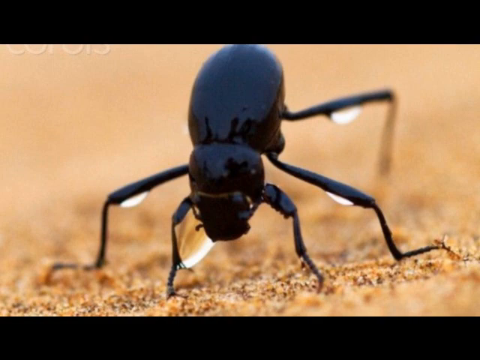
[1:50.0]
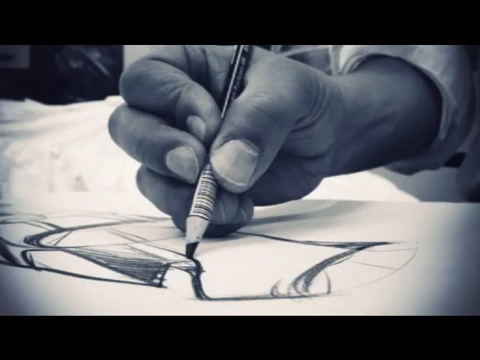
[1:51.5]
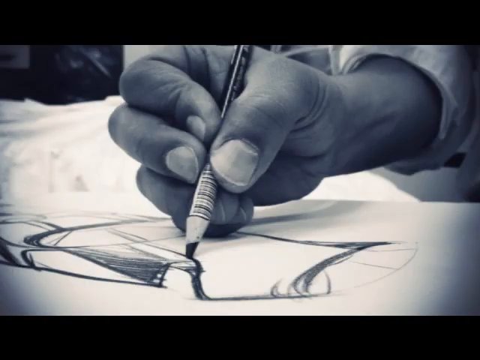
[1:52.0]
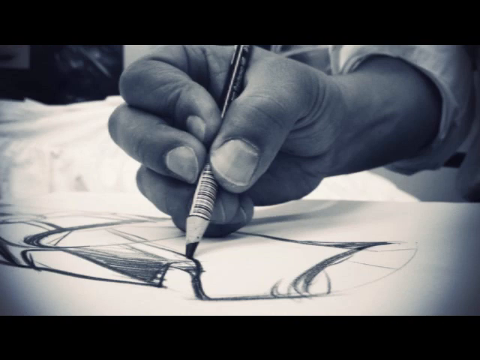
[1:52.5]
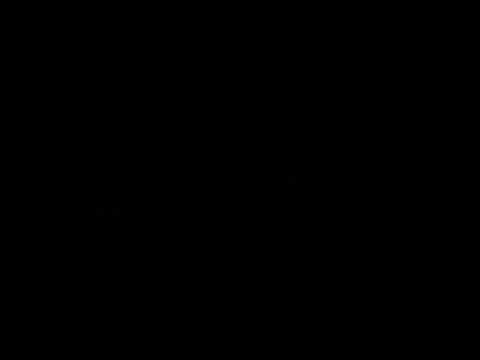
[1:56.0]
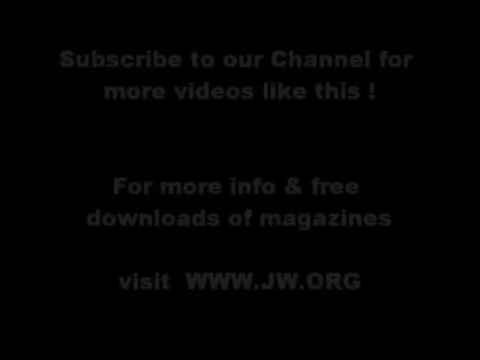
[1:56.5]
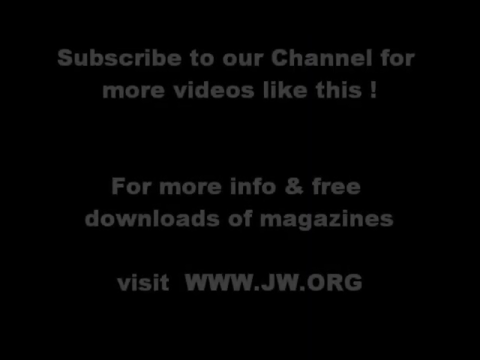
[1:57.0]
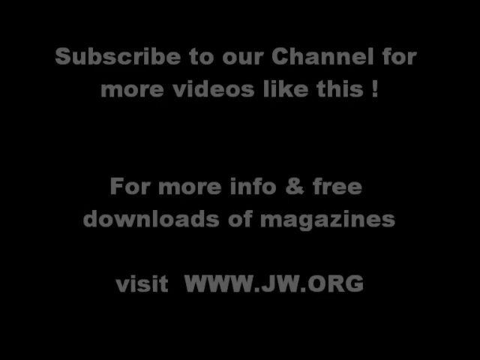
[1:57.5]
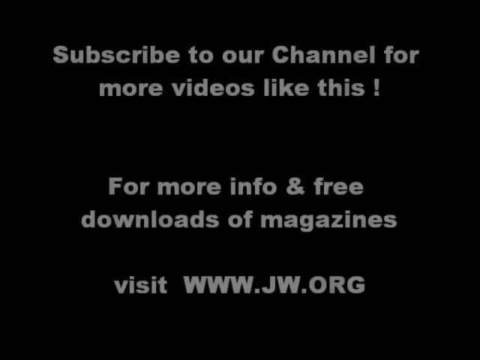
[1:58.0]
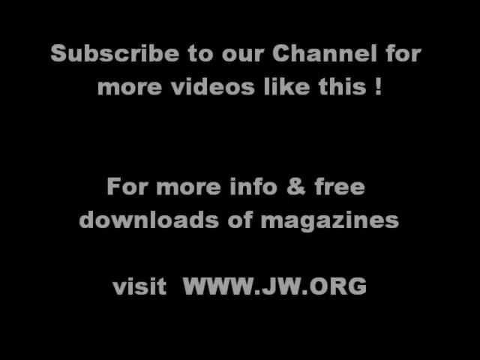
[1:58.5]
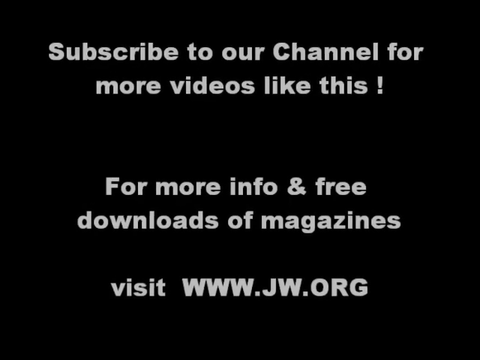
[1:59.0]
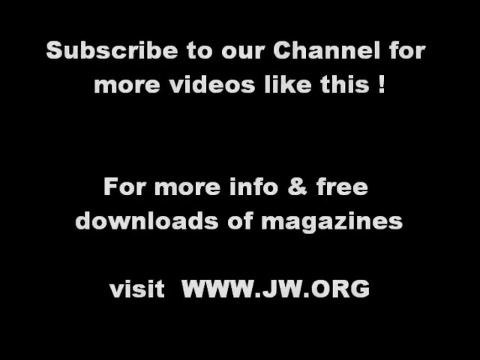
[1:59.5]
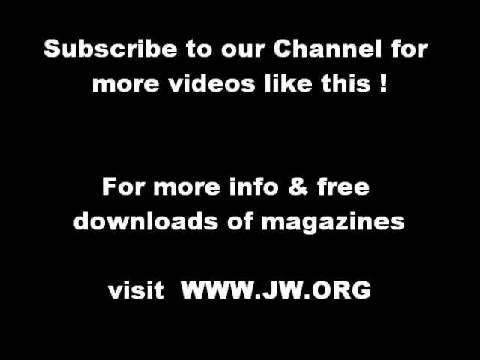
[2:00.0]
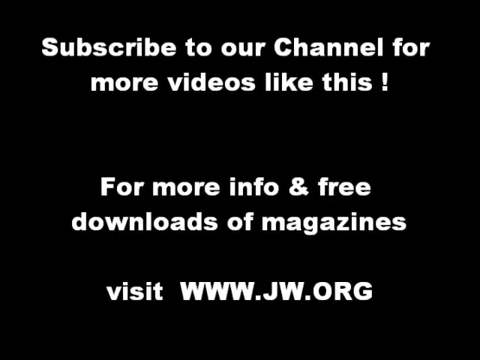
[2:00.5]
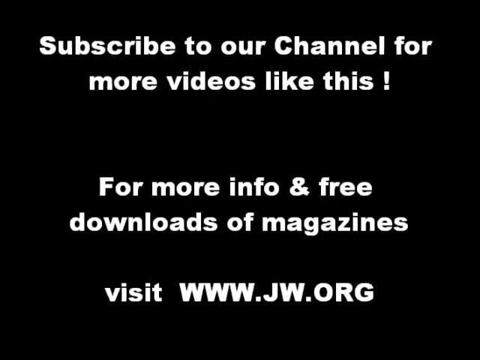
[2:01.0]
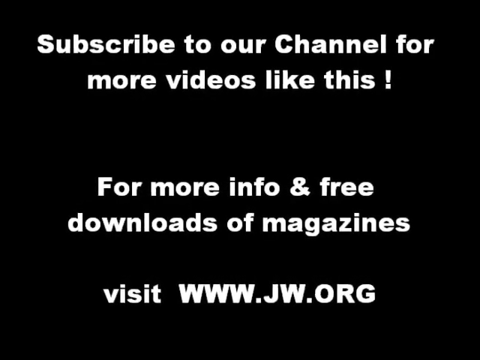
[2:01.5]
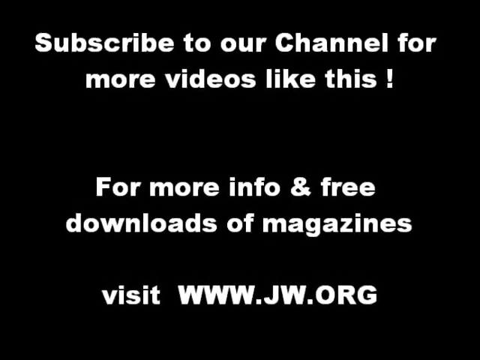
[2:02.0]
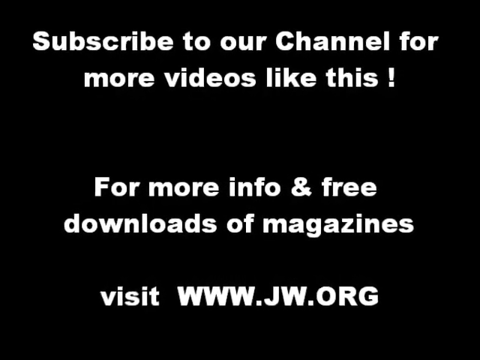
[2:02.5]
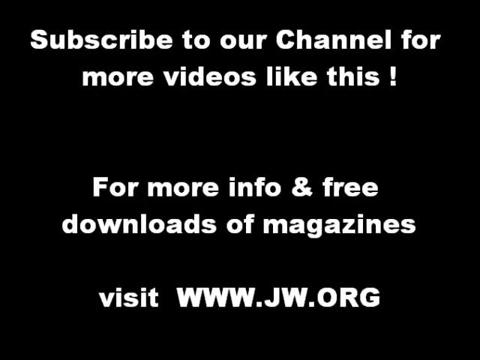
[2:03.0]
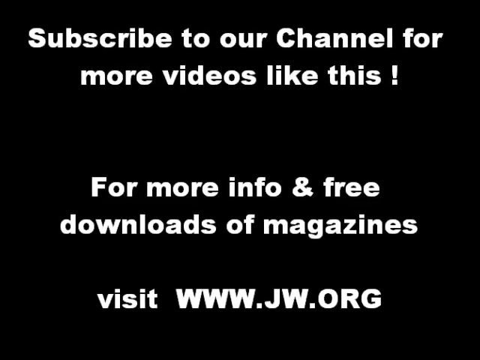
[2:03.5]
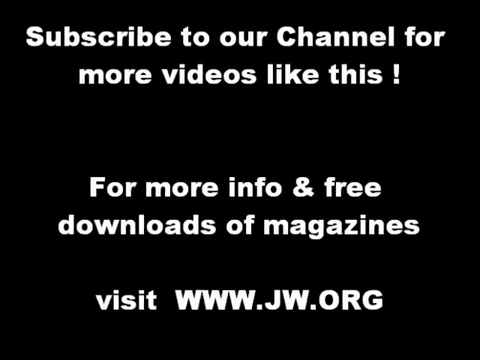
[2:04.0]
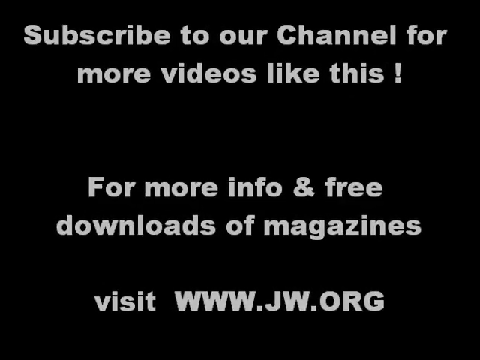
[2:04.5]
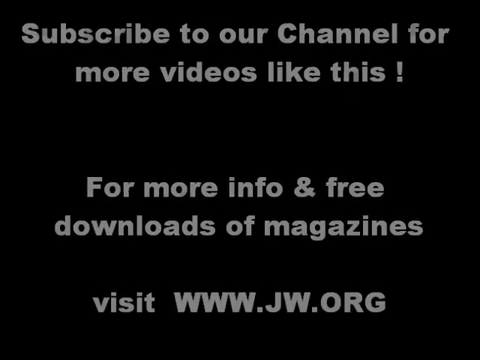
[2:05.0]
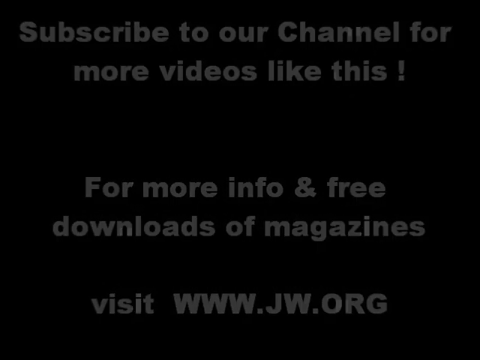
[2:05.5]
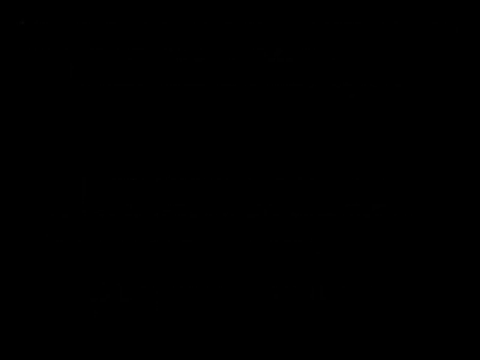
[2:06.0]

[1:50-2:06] A black beetle appears with water droplets below it. It seems to have long arms and is on top of a dirt ground; a microscopic view shows the sand's different grains and the different colors of those grains. Many water droplets surround the beetle's arms, and a glaze of water covers its back and every portion of it. The video cuts to a black and white photo of somebody holding a pencil and drawing on a piece of paper, with a clear sketch visible. It then cuts to a black page with white text saying "subscribe to our channel for more videos like this" and "for more info and free downloads."